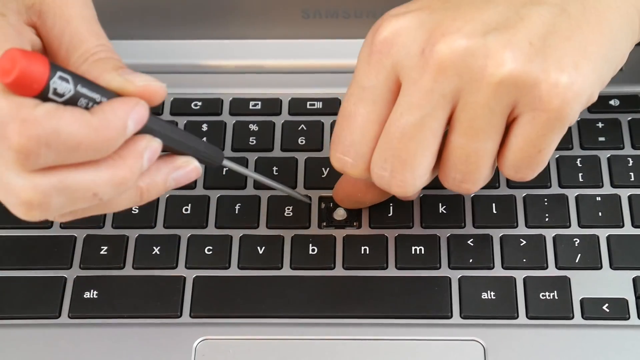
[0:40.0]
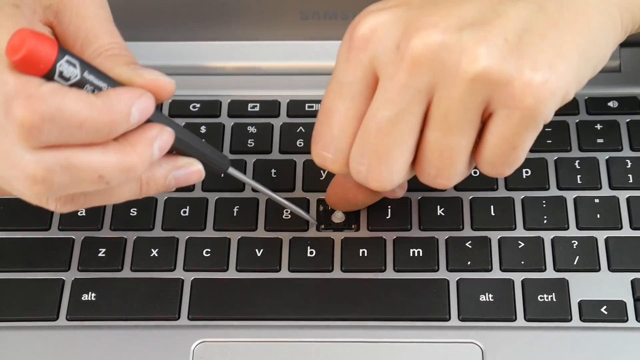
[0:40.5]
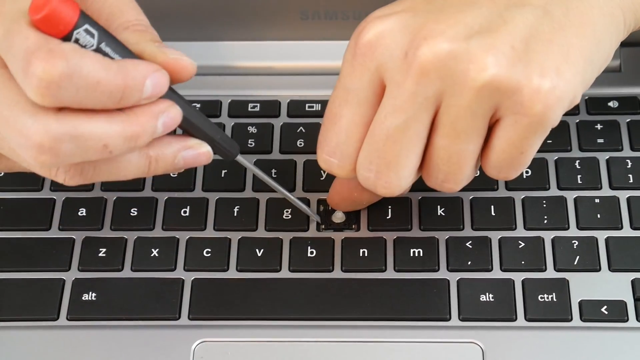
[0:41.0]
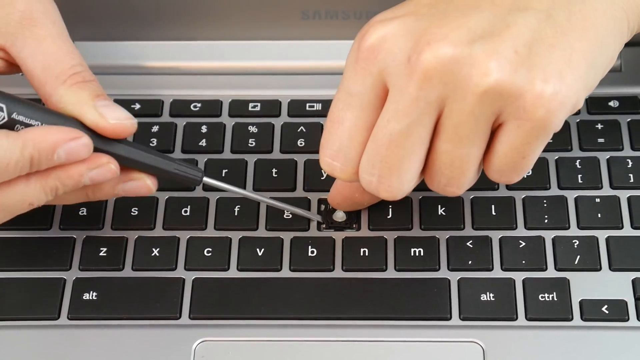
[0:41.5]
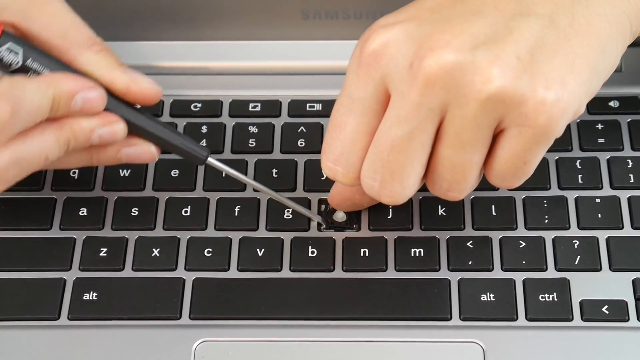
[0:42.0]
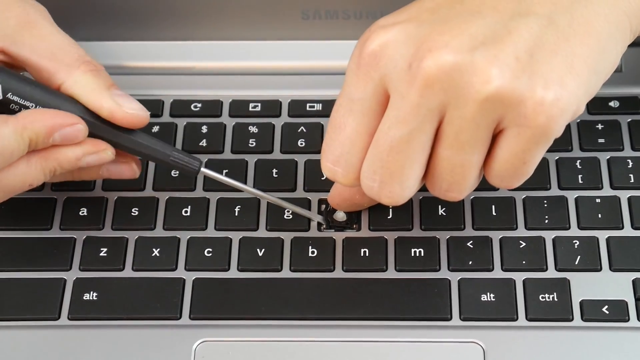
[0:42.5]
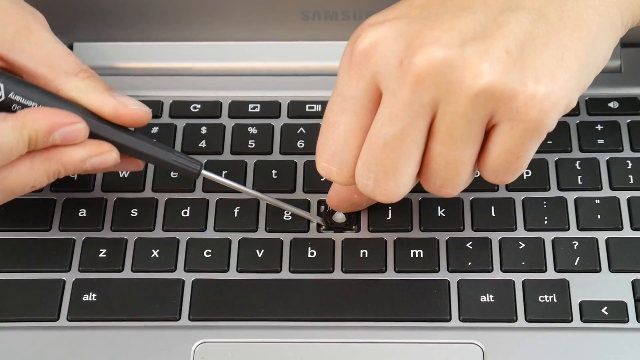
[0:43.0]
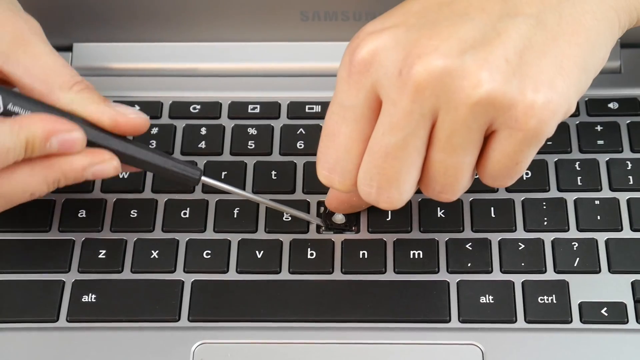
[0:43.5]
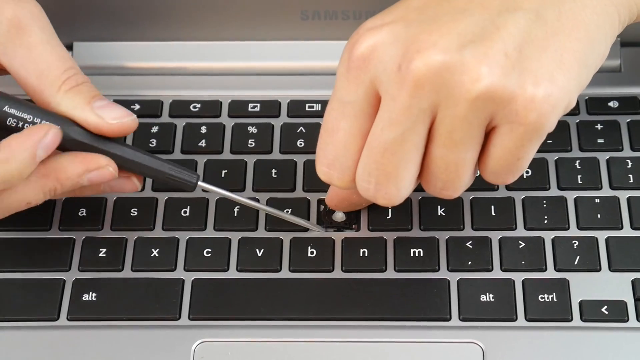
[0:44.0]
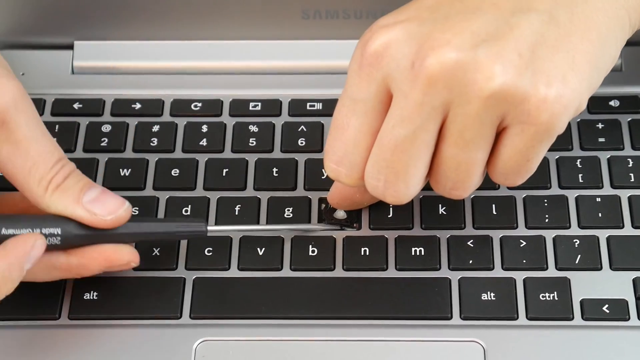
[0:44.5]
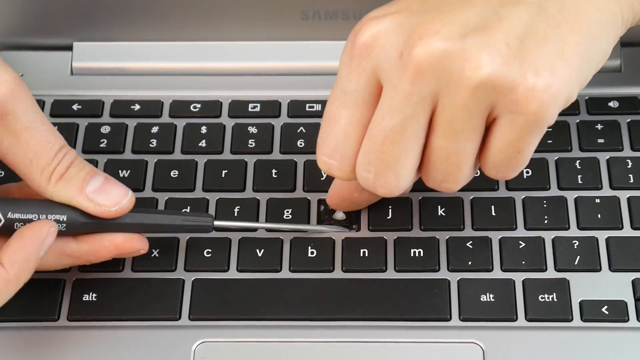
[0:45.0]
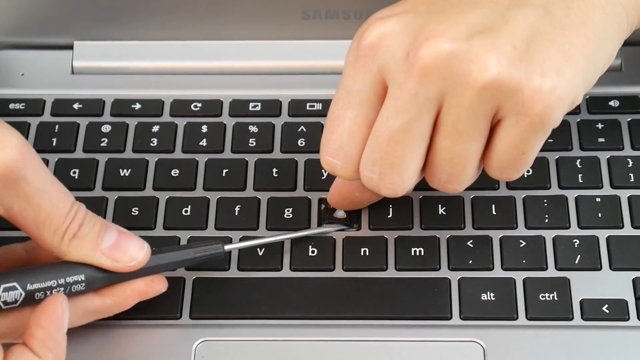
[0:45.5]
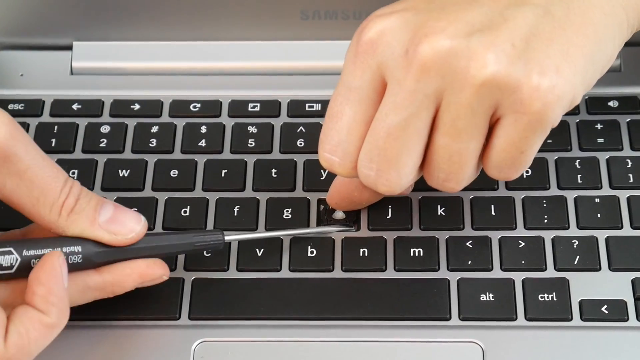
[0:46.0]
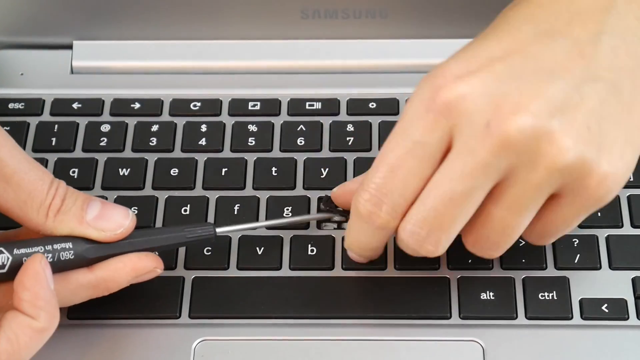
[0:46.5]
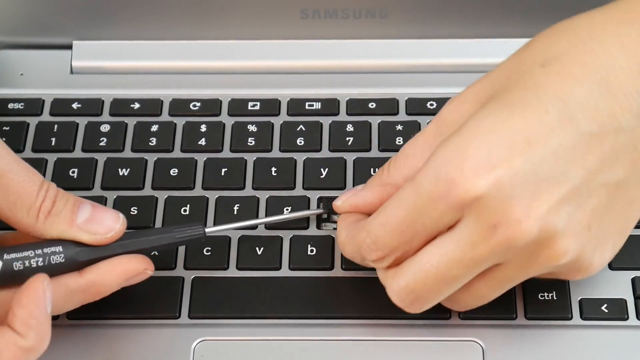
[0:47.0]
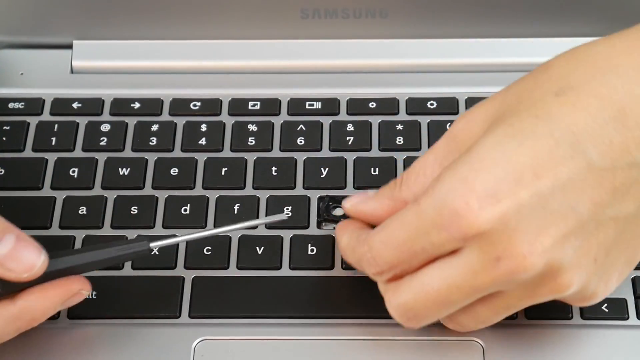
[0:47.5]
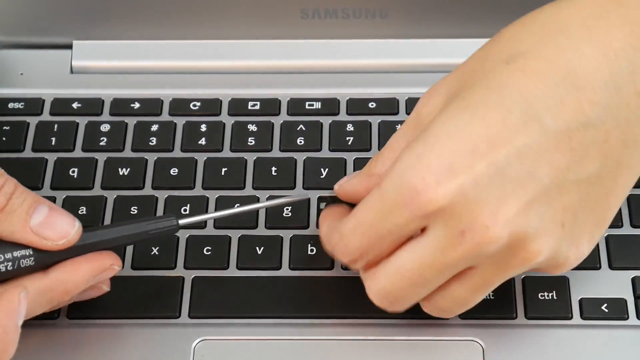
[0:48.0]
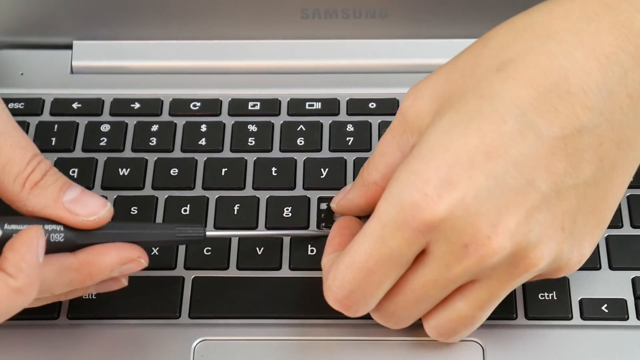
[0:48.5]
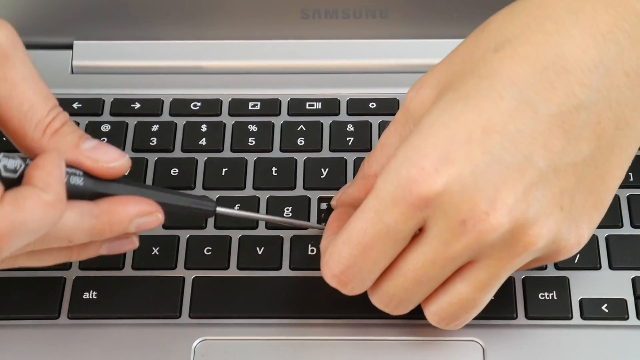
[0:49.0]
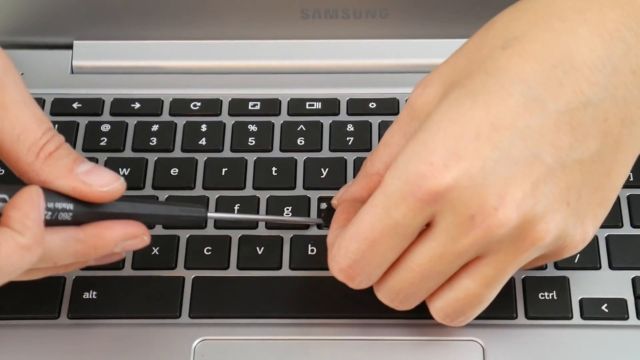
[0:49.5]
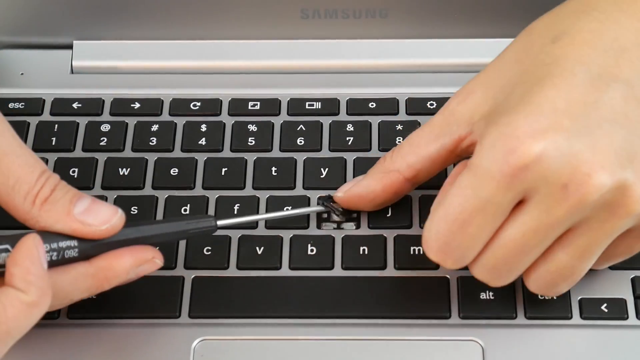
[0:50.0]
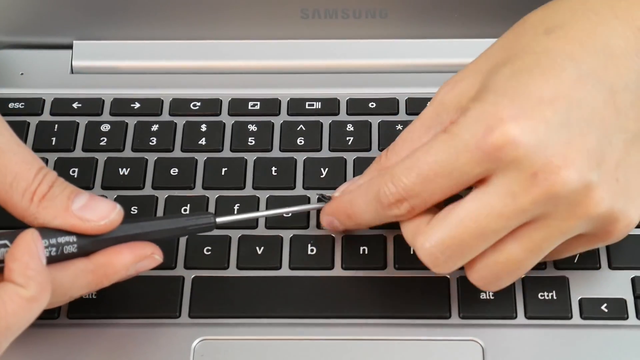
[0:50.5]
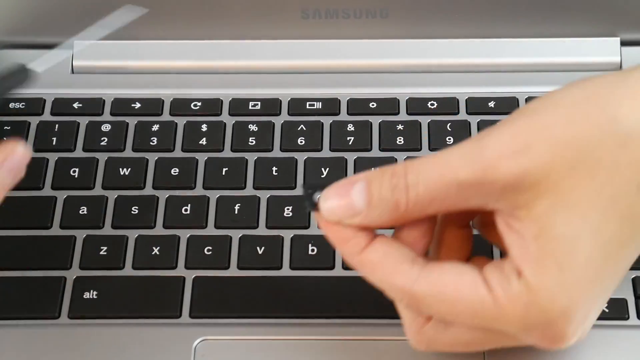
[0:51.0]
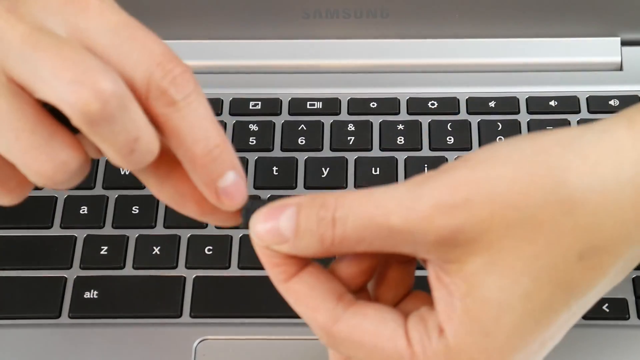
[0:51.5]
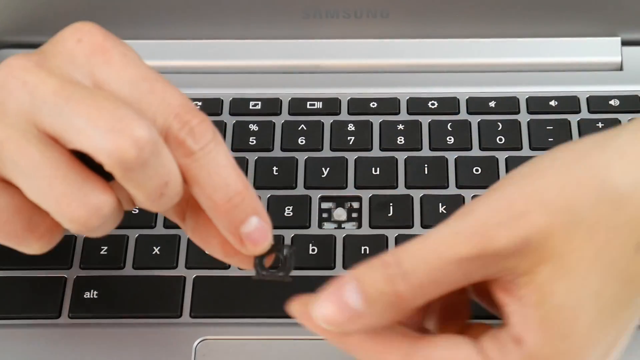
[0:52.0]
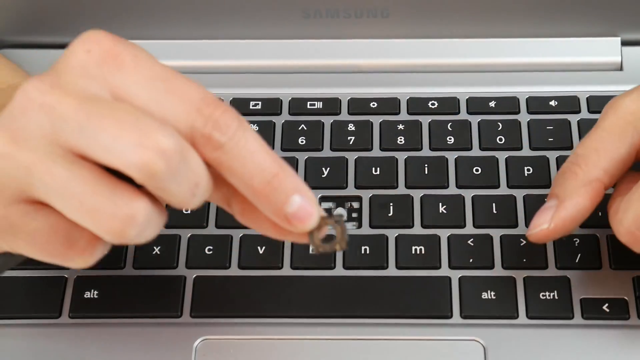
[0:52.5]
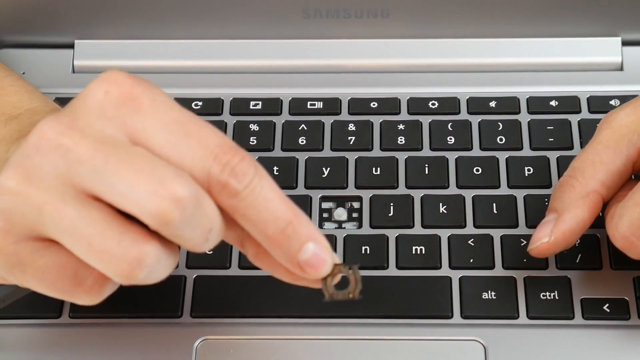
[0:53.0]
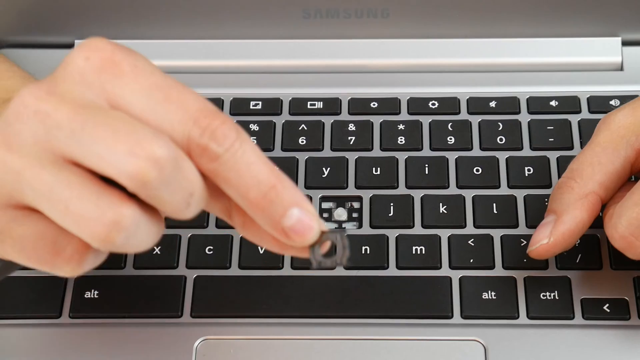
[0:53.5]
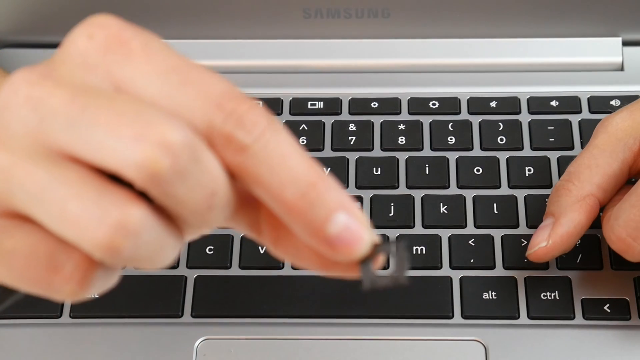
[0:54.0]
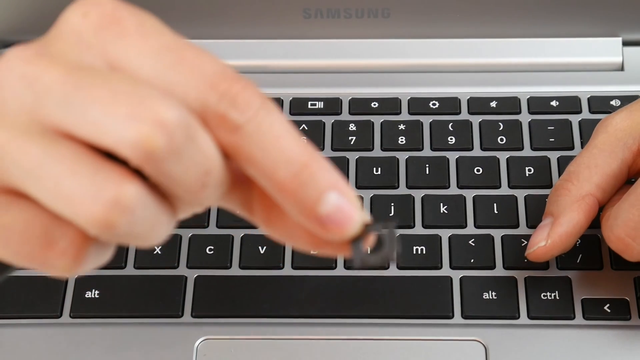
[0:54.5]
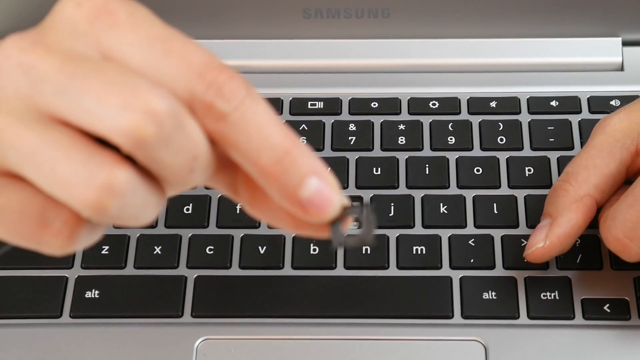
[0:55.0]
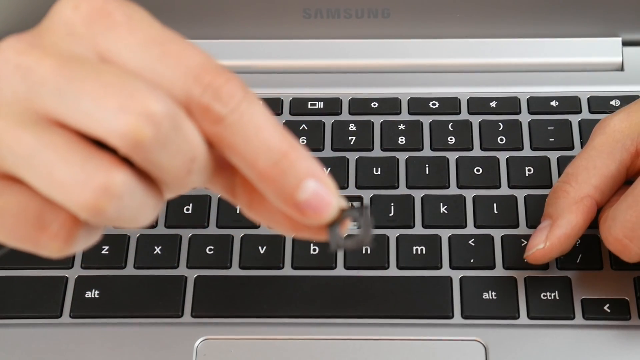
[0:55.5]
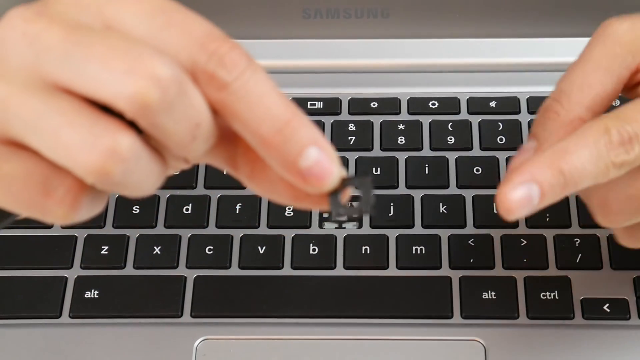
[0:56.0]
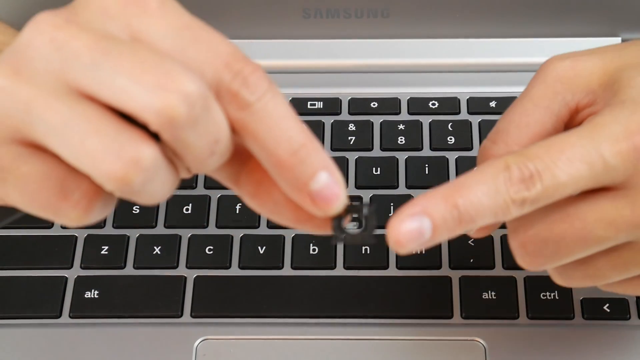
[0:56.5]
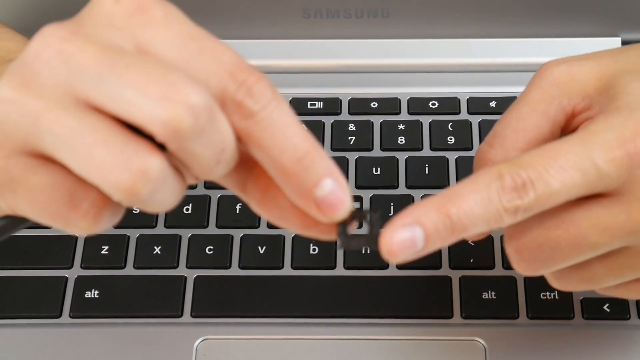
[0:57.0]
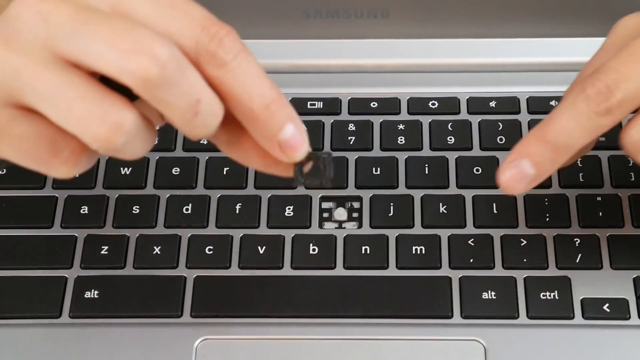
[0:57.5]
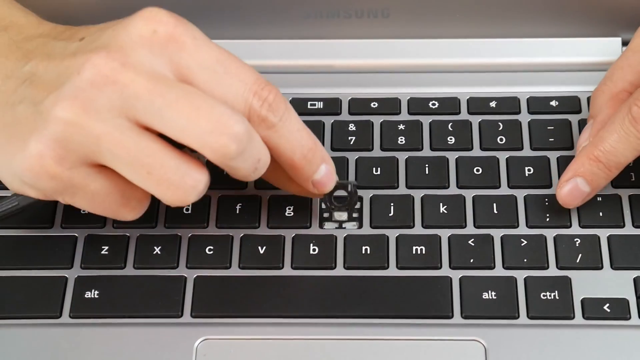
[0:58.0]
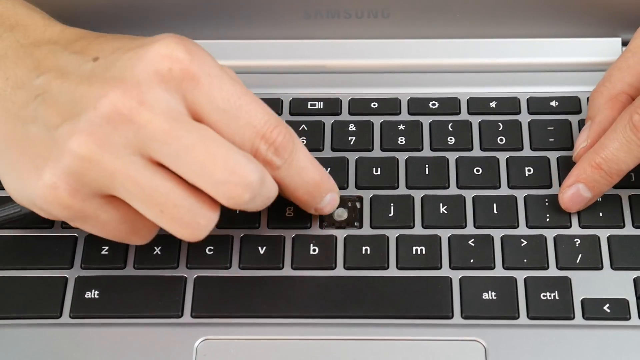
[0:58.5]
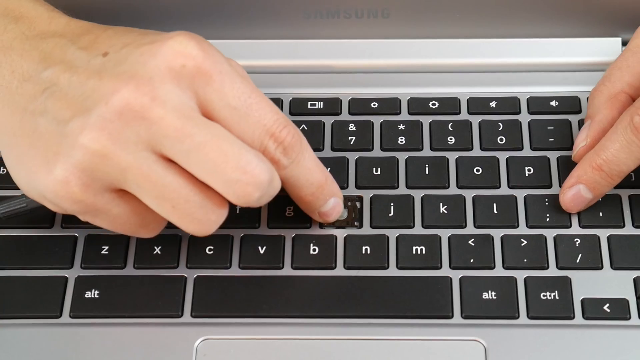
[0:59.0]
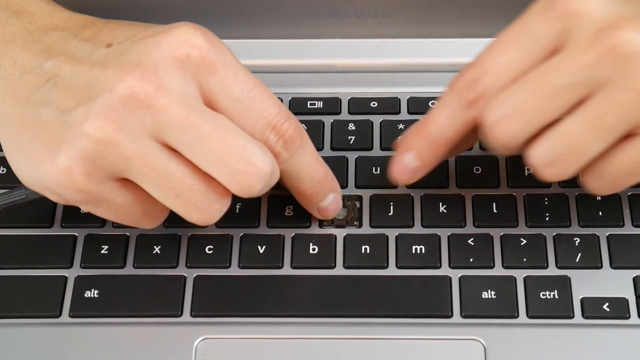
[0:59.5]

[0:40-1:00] He has one thumb under the top part of where the H key was, while the screwdriver is kind of on the left side of that spot, still trying to get underneath a black part of the key area. The piece comes loose, and he picks it up with one hand, kind of showing it to the camera and bringing it a little closer, with one pointer finger pointing toward it. It looks like a square, almost plastic piece. He then places it back toward the key area. He is still holding the same black-handled tool in one hand; it is probably not a screwdriver but a little black handle with a very thin metal piece coming out of it that almost looks a little sharp at the end.